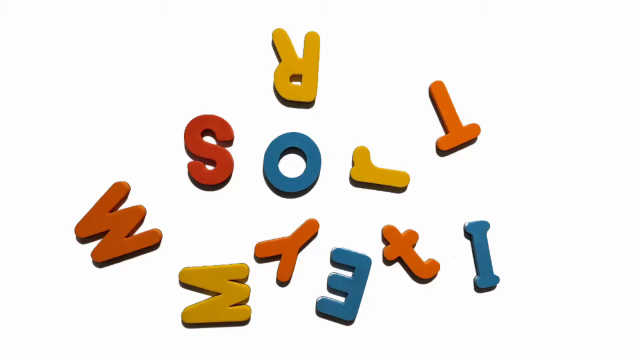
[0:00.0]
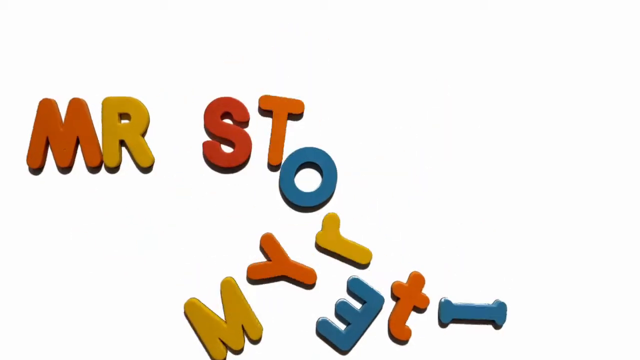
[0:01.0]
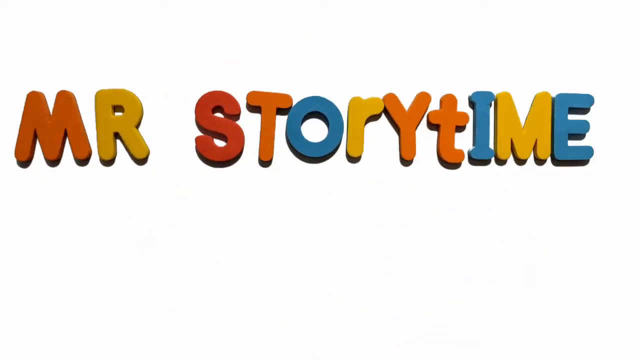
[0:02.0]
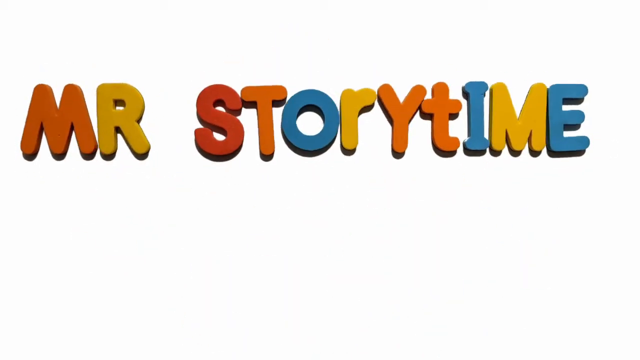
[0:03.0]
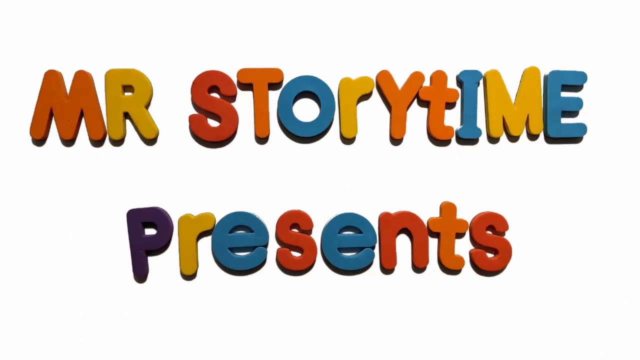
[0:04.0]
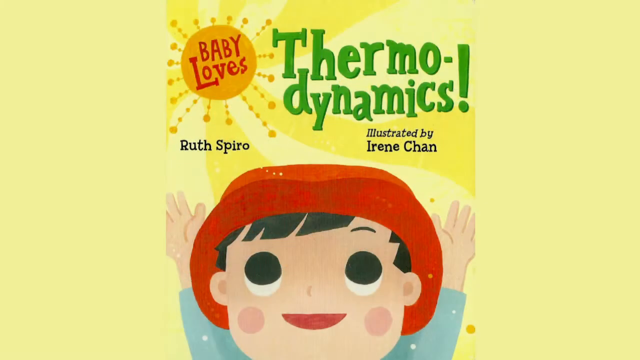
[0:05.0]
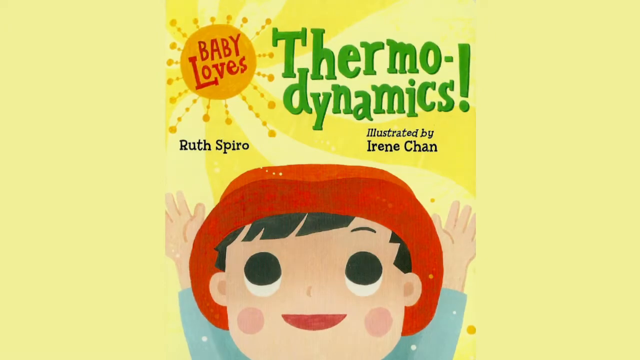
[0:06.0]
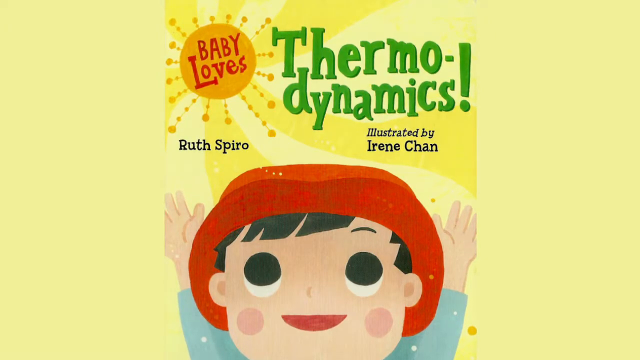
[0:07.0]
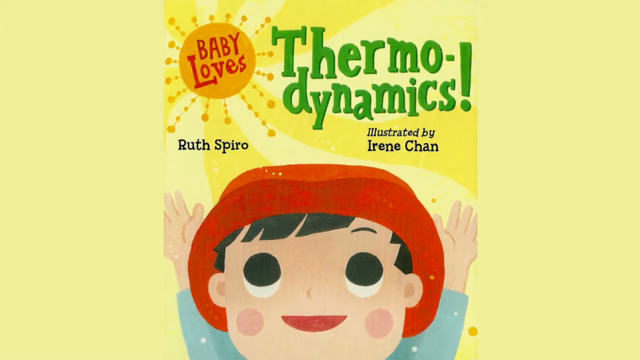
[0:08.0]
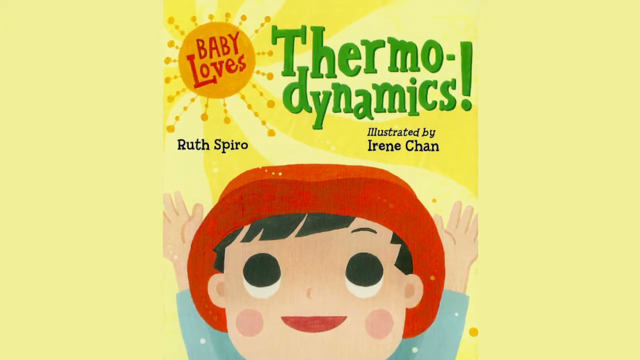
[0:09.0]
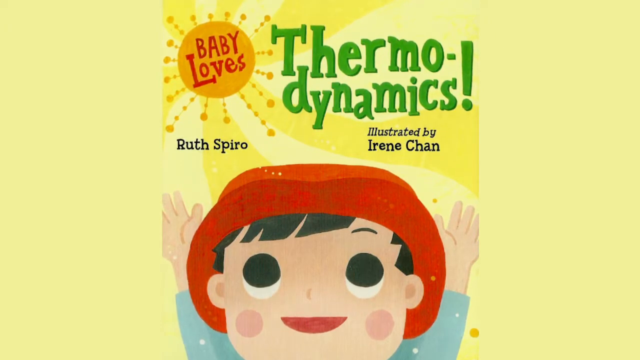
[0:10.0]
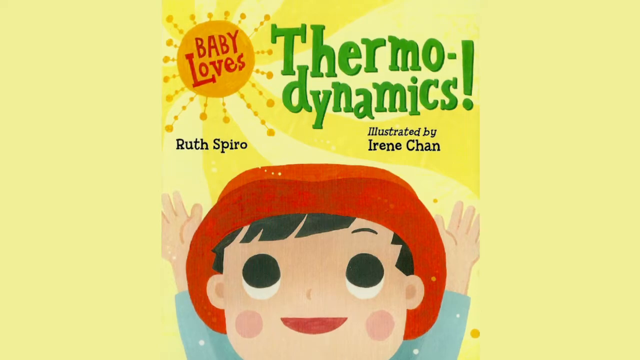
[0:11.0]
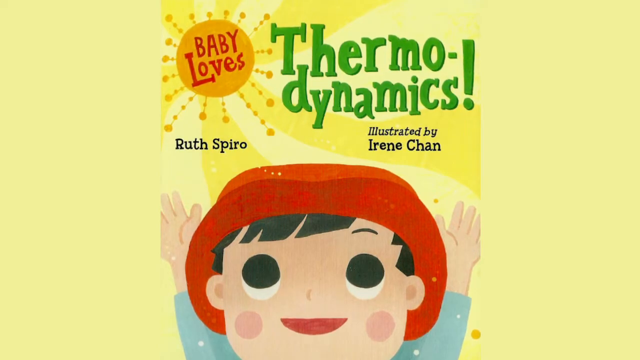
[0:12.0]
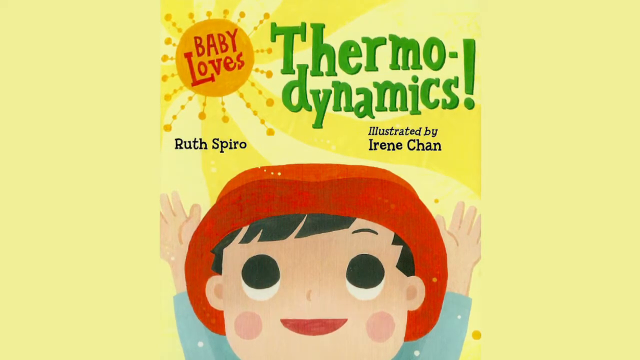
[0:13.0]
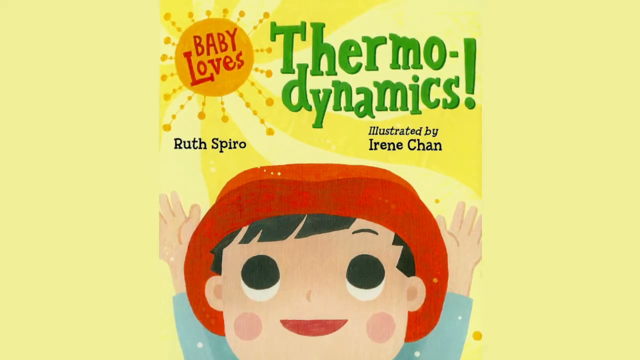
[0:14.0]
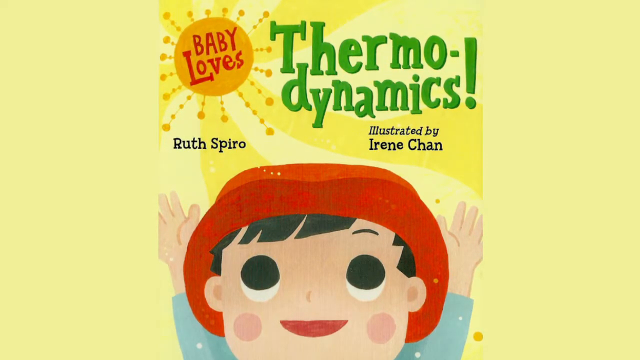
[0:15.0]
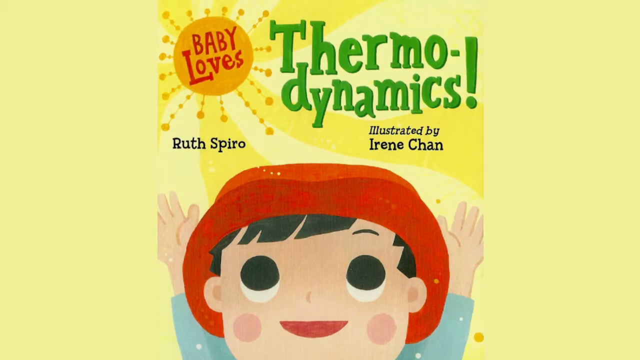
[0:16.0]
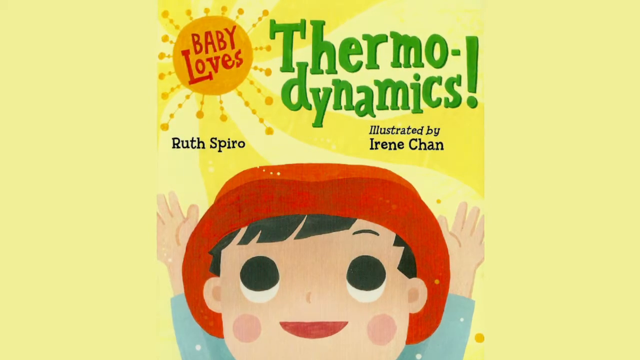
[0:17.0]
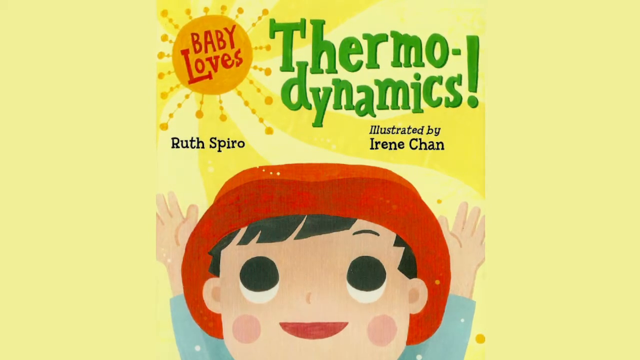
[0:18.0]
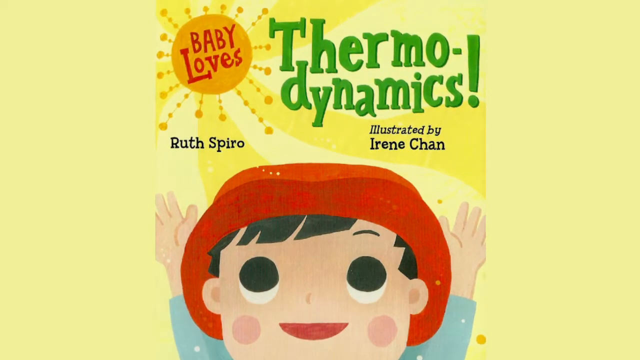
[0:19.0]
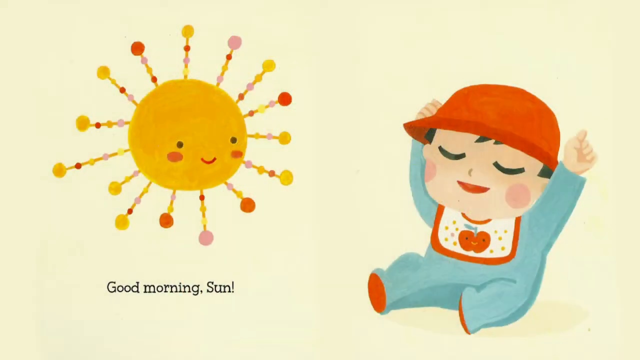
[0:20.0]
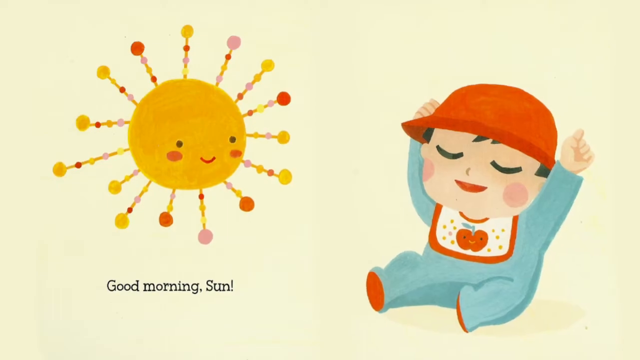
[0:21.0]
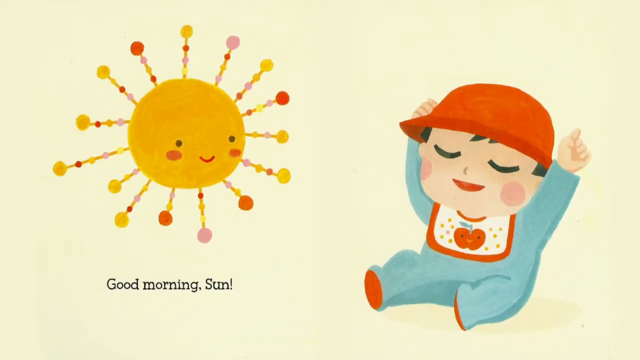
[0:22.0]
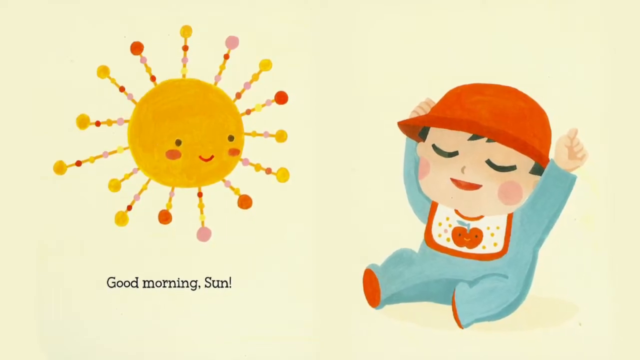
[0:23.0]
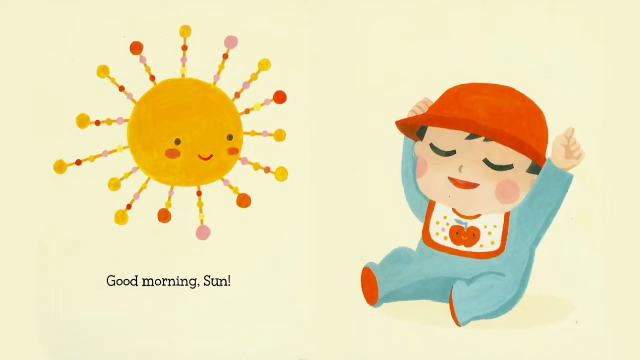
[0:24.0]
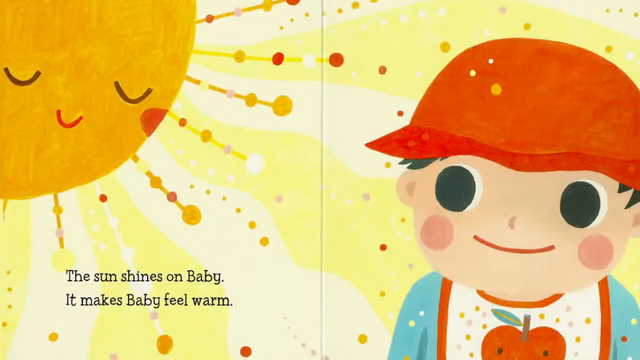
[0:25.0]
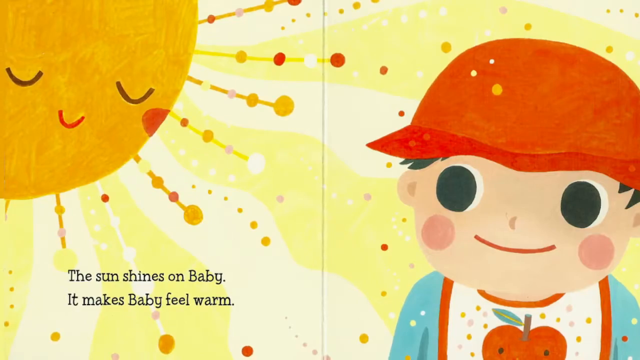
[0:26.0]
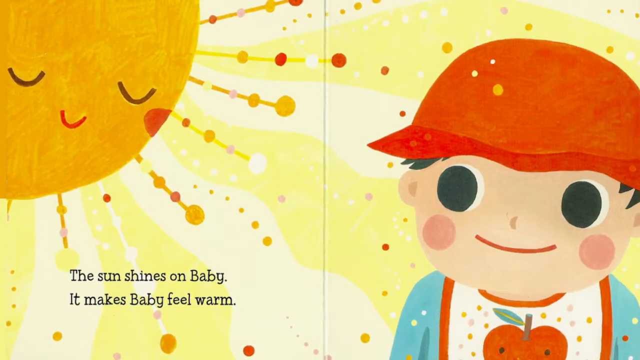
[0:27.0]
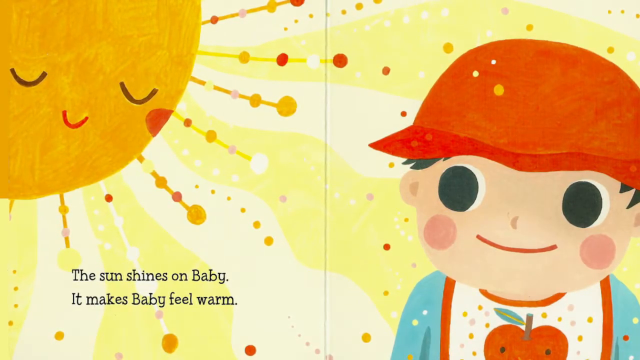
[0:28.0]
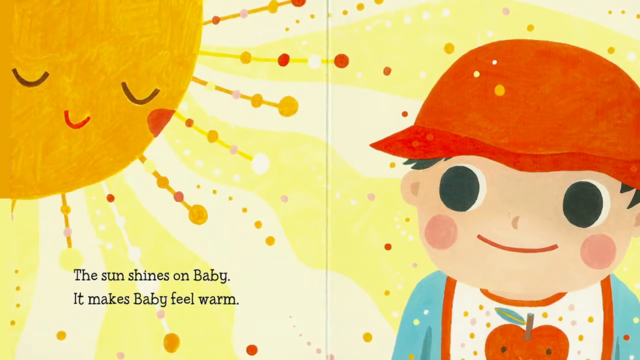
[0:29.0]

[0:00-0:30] The video begins with multicolored letters moving around in a pattern. They finally come together to spell "Mr. Storytime," and then another group of letters comes up behind it spelling "presents." The letters of "Mr. Storytime" are, in order, orange, yellow, red, orange, blue, yellow, orange, orange, blue, yellow, blue, and the letters of "presents" are purple, yellow, blue, orange, blue, orange, red. The letters bounce up and down. The video then goes to a static image of a book cover. The background is yellow, and the book is also yellow. "Baby loves" is written inside a star, a sun giving out rays, in the top left. Next to it is "thermodynamics," written as "thermo-dynamics" with "dynamics" underneath and a big exclamation point, in green. The author's name, Ruth Shapiro, is in black under the sun, and "illustrated by Irene Chan" is in black under "dynamics." There is a child in an orange hat with a red brim, with black hair coming out underneath it, large black eyes, and hands upraised to the sun. The cover stays on screen for about 15 seconds. Next comes a picture of the sun with a smiley face, some rouge under its cheeks, and various colors on the rays coming out of it. It looks at a baby with its arms in the air and one finger extended, wearing a similar hat. It appears to be the same child, with black hair and two red circles on its cheeks.